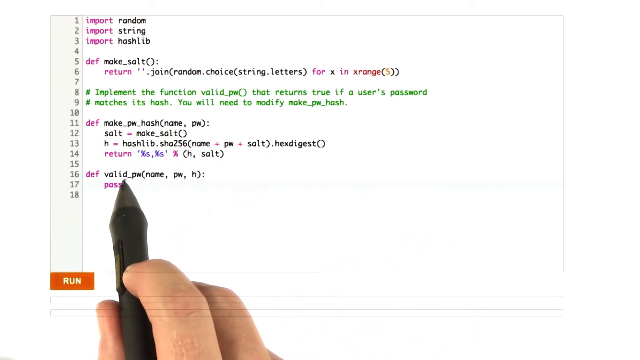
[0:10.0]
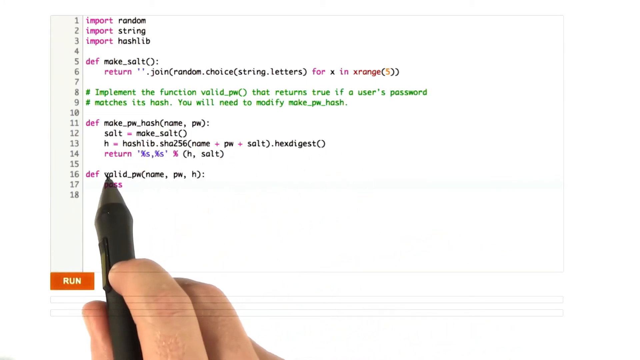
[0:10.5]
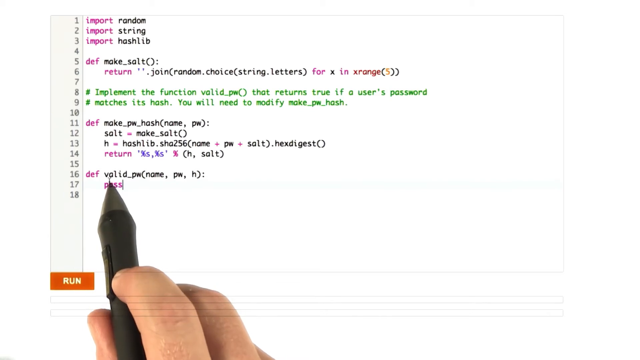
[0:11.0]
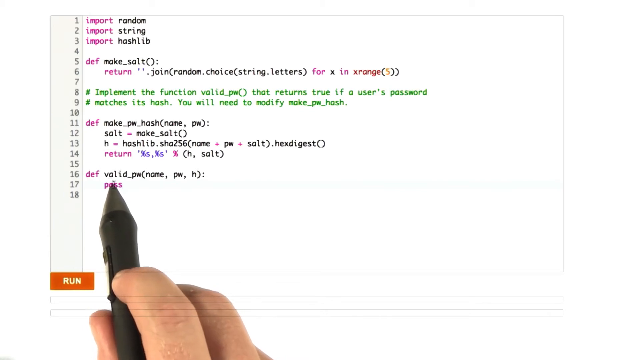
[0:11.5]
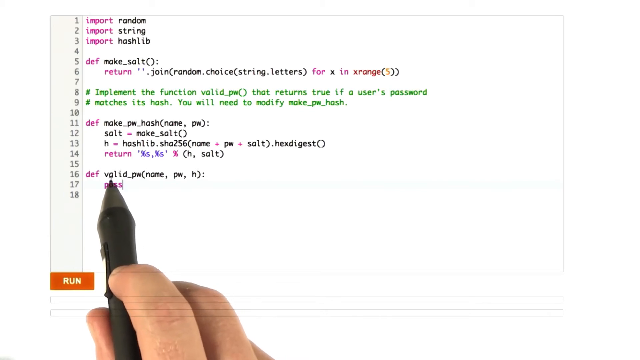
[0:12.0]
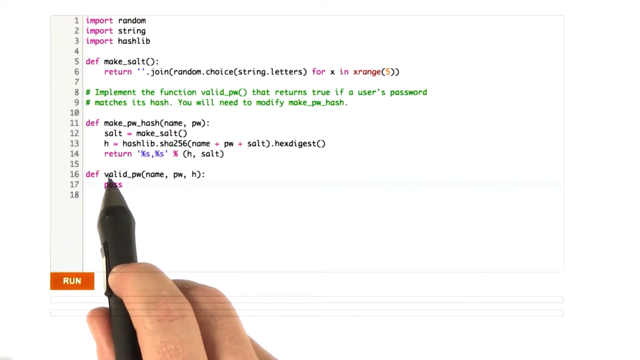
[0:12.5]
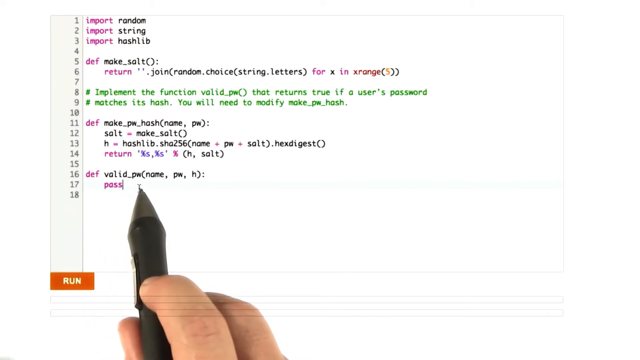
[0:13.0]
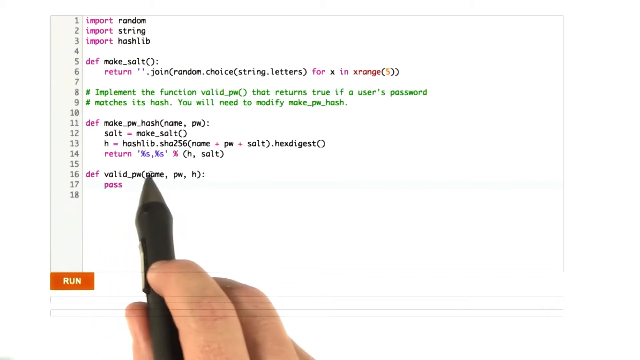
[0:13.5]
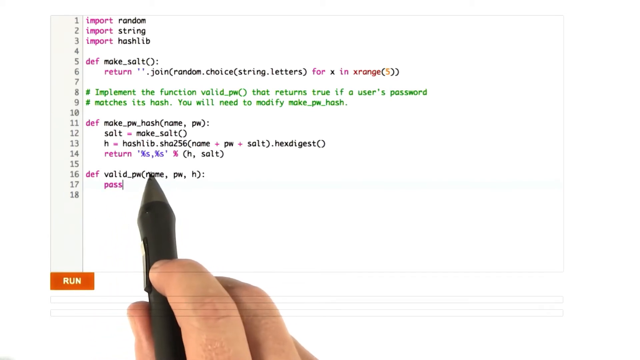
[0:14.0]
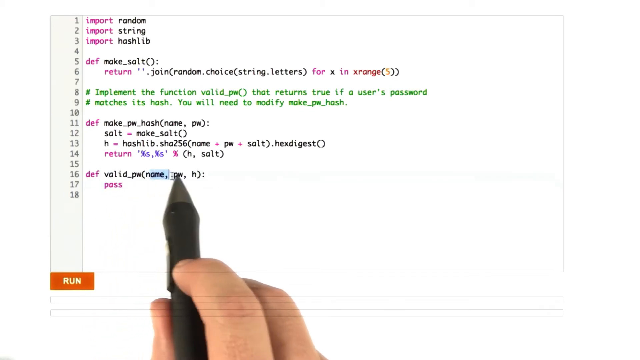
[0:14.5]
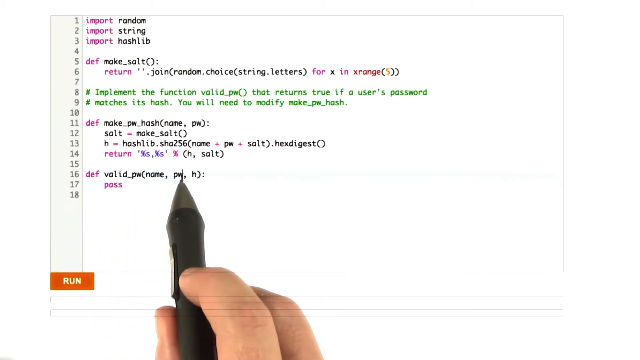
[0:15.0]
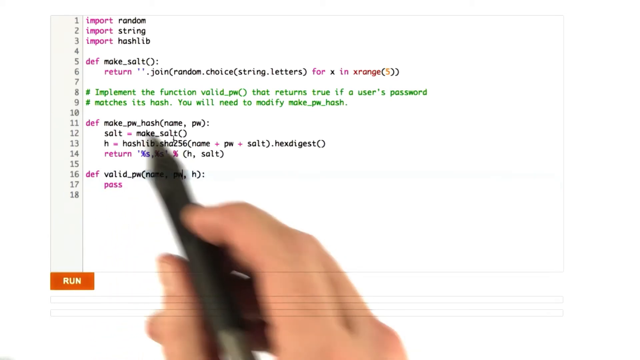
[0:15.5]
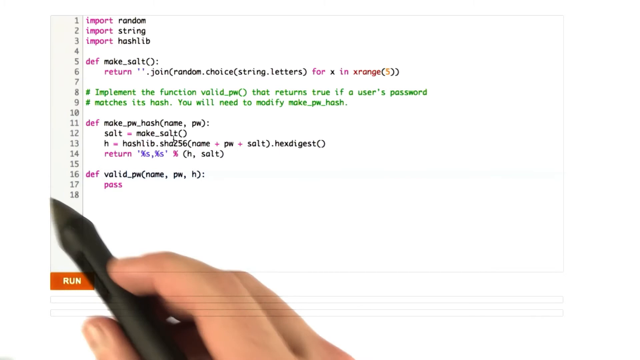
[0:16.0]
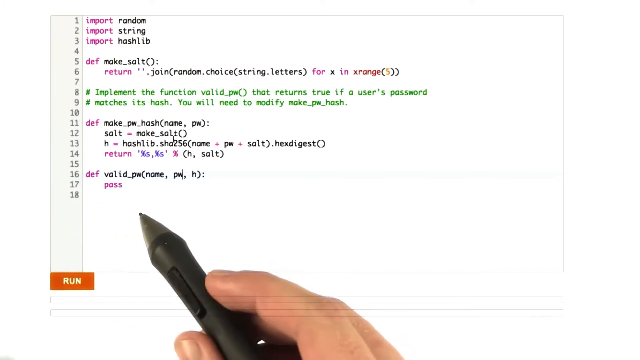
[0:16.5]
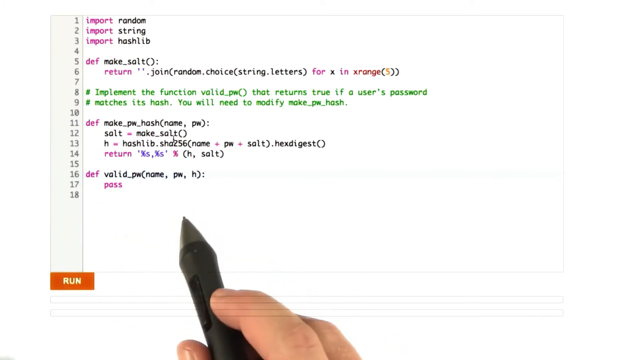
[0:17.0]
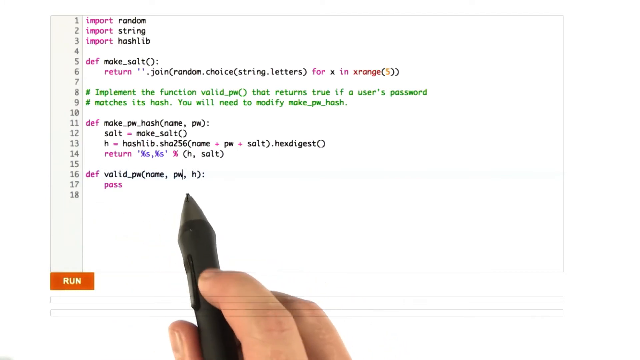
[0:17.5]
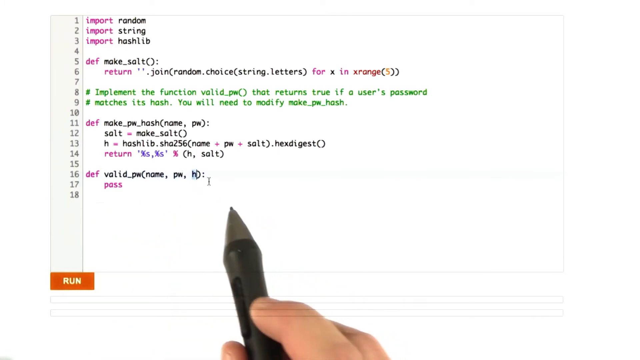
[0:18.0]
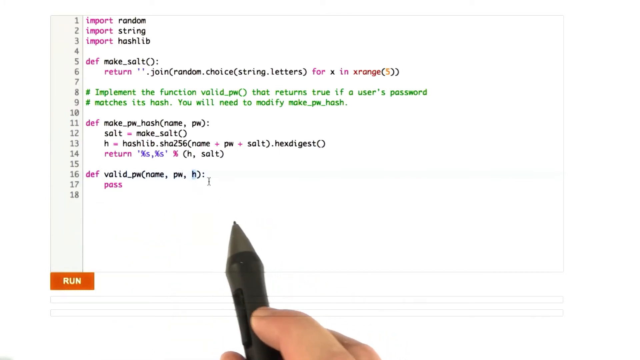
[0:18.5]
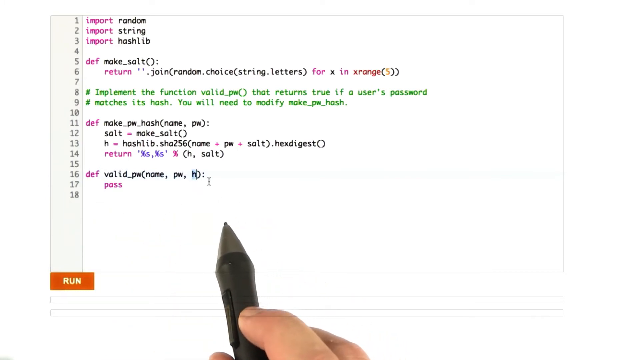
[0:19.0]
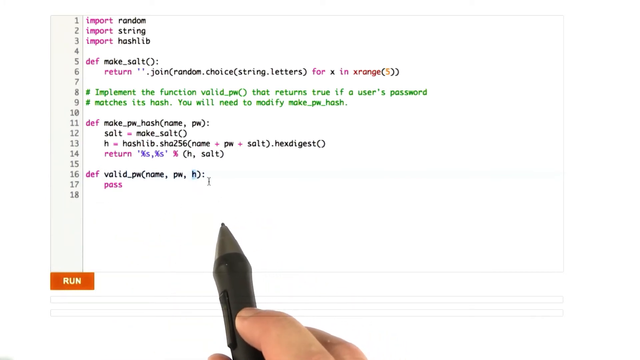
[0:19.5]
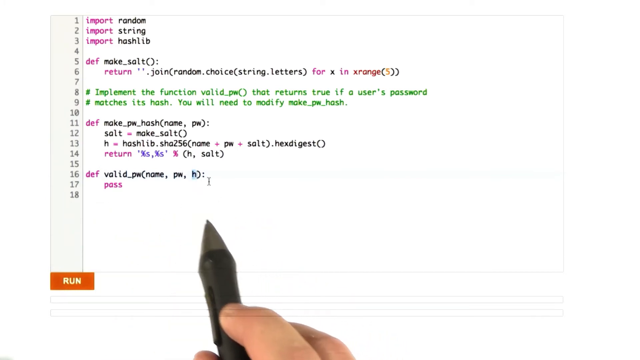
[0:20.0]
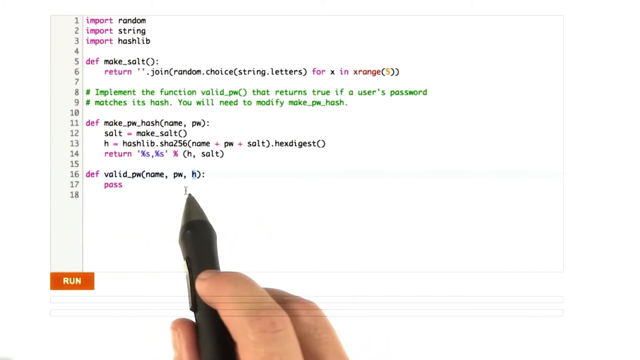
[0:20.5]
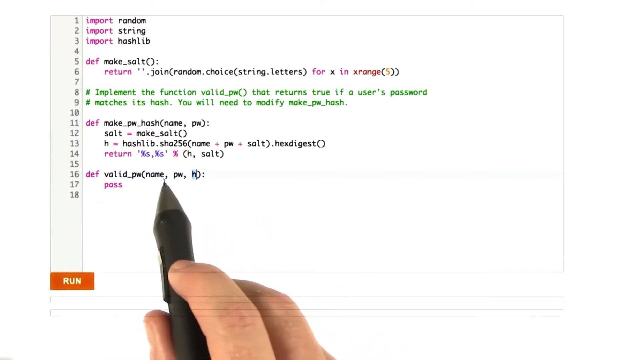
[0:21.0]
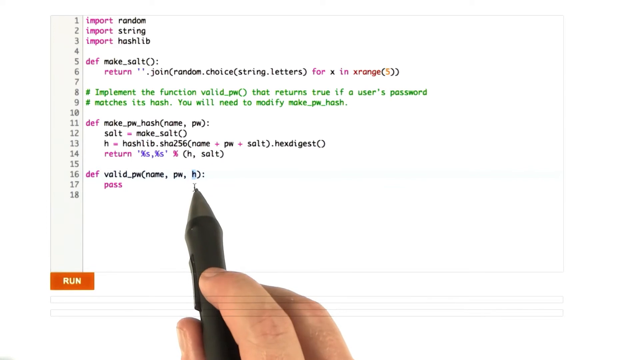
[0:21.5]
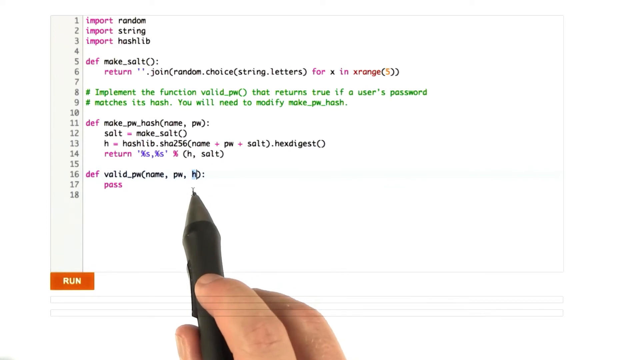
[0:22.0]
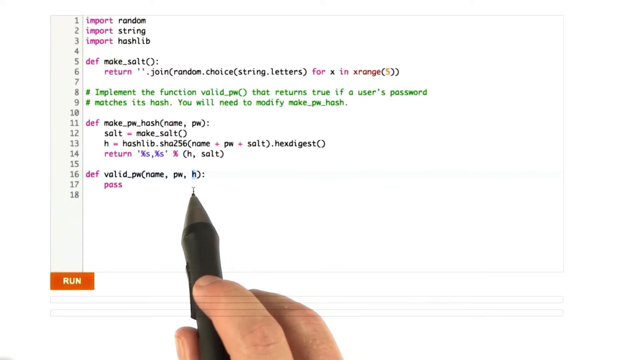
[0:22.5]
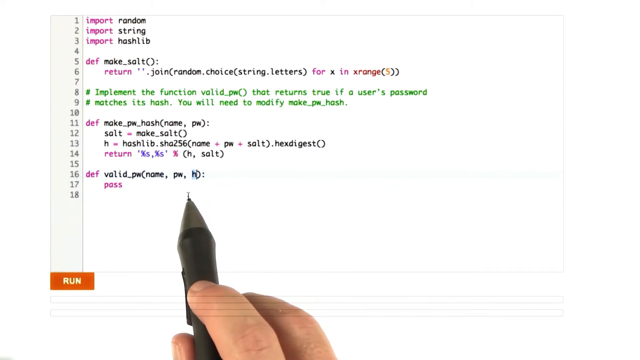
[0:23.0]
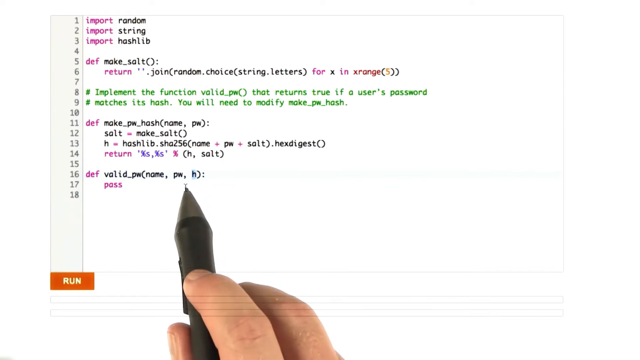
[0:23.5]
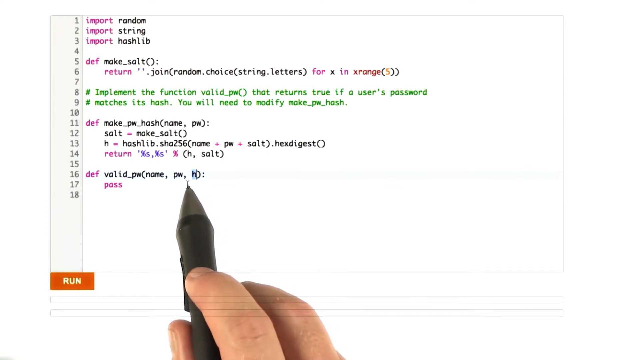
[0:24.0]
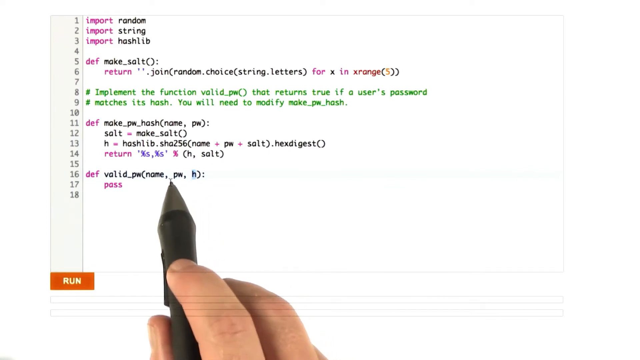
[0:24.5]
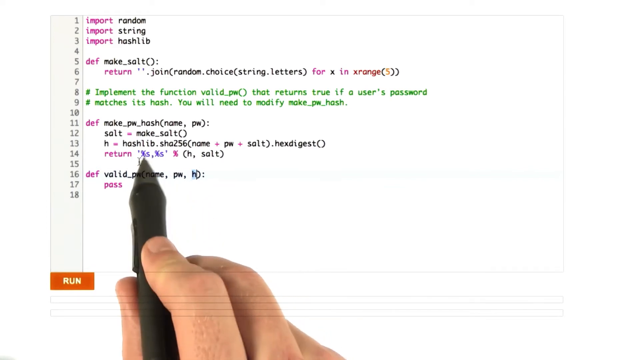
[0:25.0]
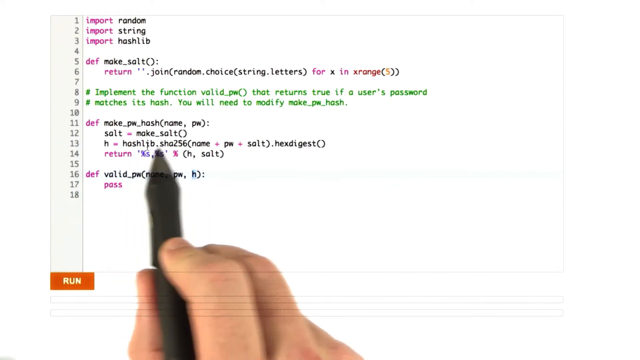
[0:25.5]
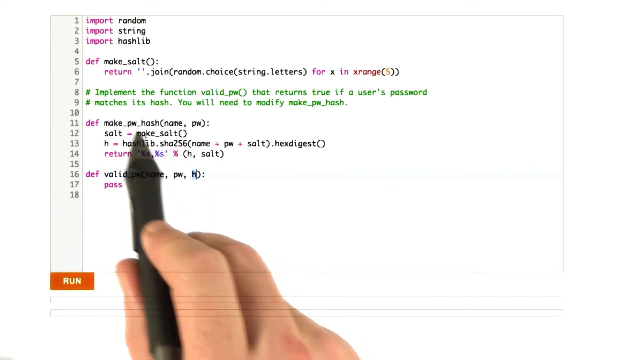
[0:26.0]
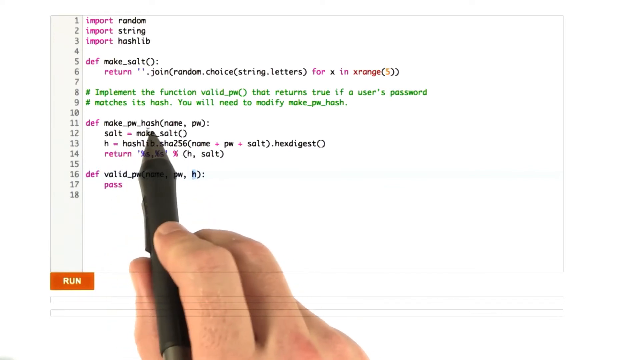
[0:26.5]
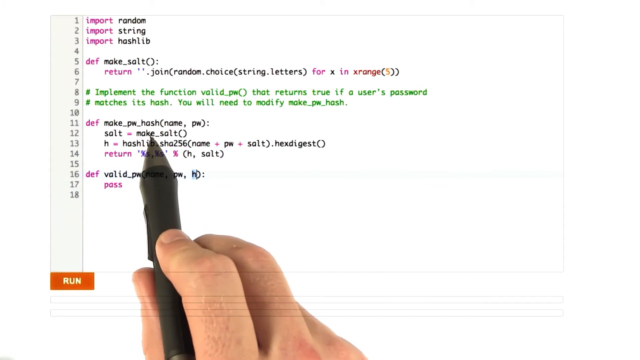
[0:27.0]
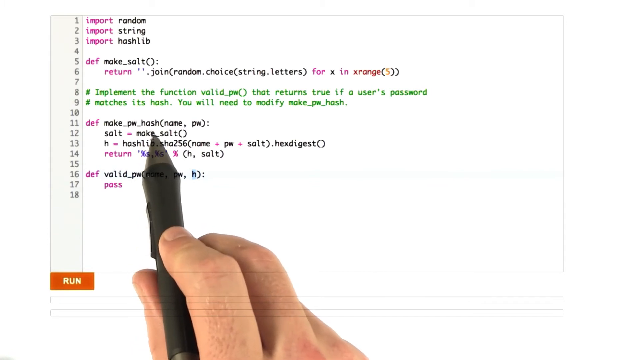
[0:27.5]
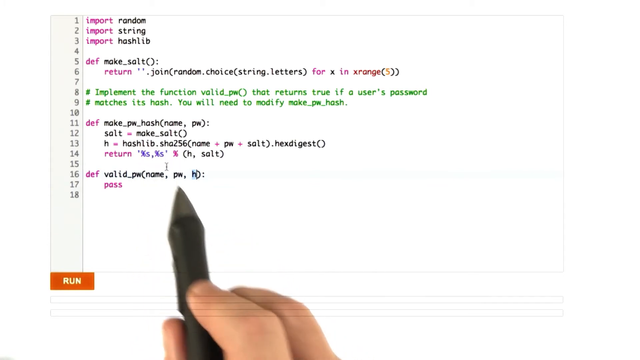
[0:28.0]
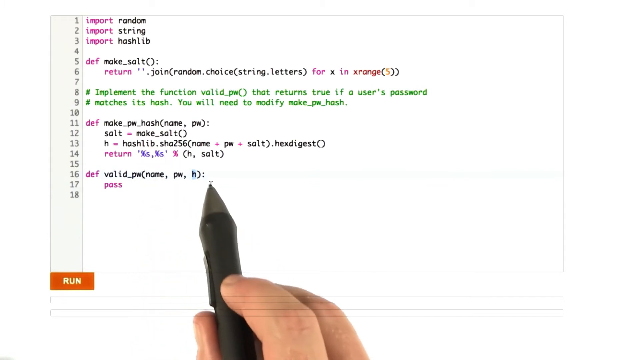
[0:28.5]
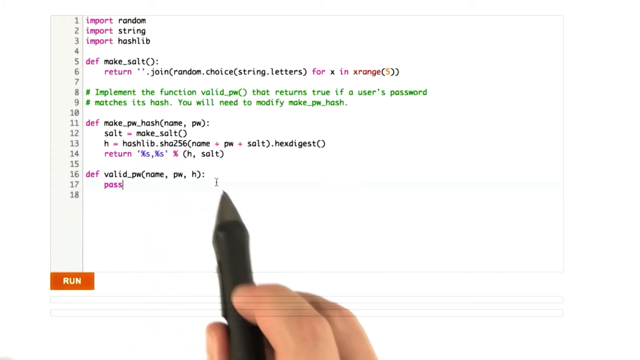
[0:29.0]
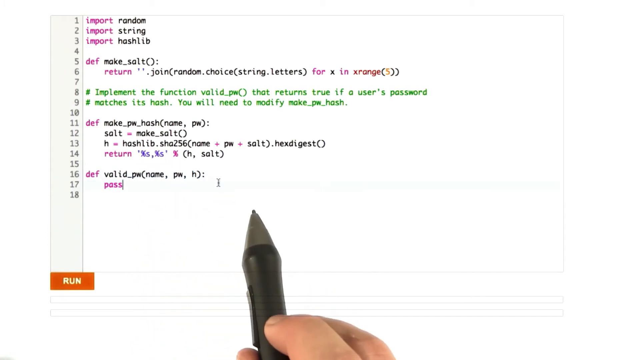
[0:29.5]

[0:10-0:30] Code that needs to be run is shown; its type is not specified. The hand of a white person holds a black pen and points to some of the letters and words of the code. Later, the person writes other parts of the code. At some point the black pen points to some of the text written there. The video also shows where to click in order to run the code, which looks quite complex.